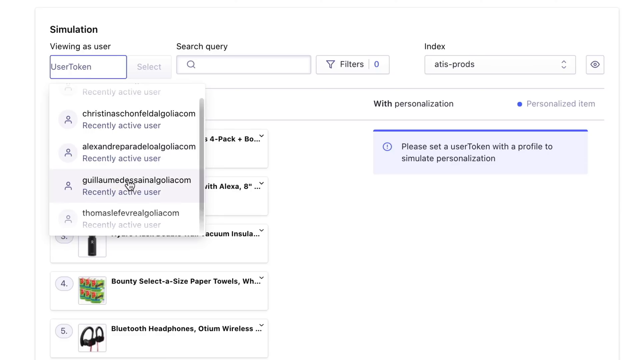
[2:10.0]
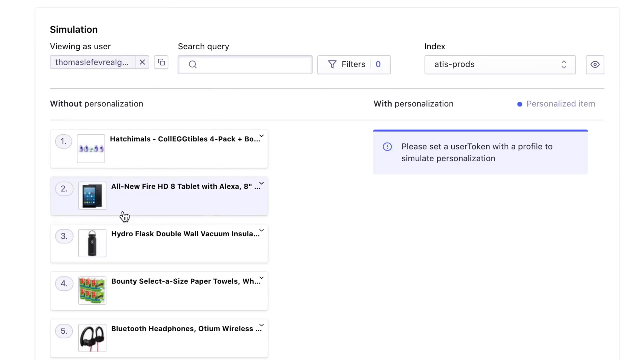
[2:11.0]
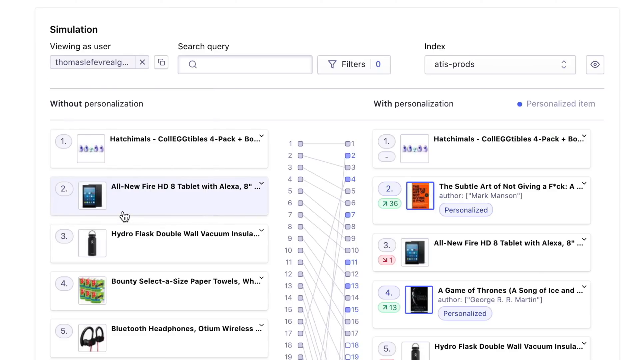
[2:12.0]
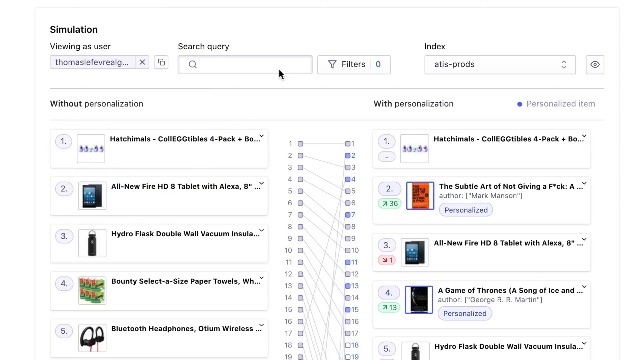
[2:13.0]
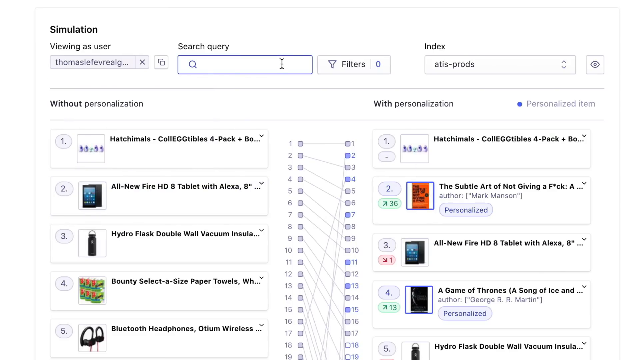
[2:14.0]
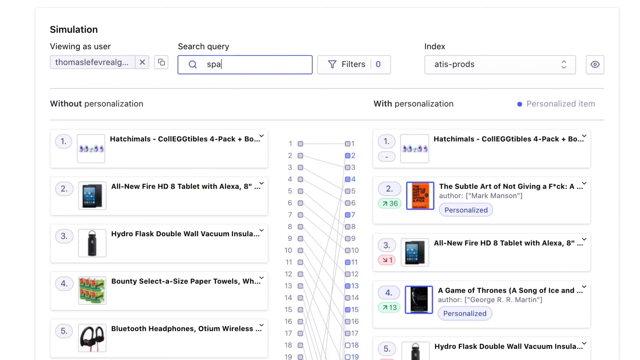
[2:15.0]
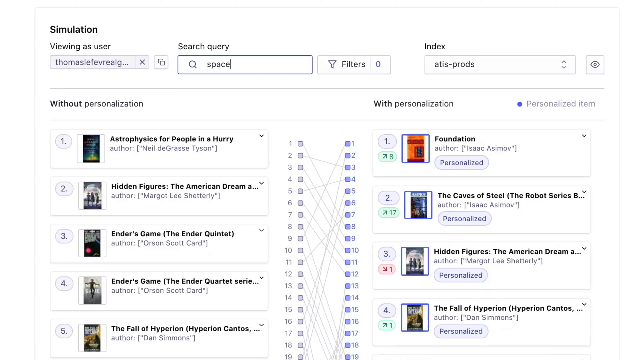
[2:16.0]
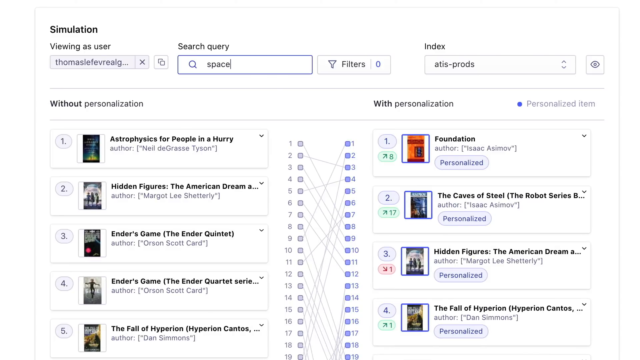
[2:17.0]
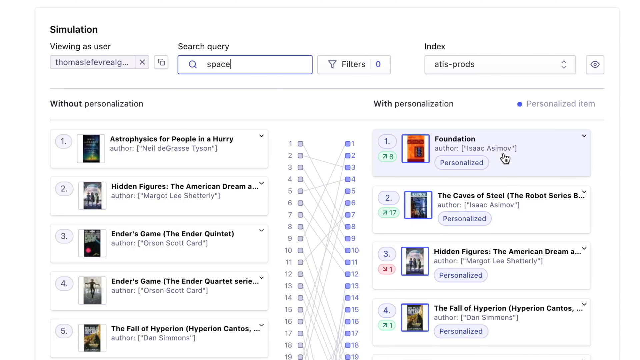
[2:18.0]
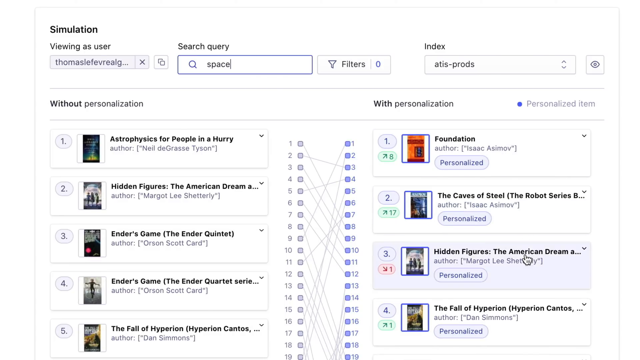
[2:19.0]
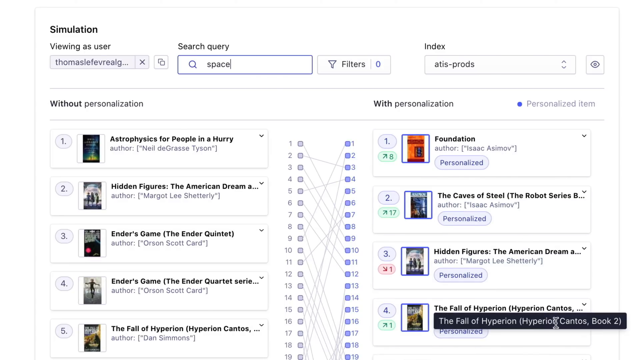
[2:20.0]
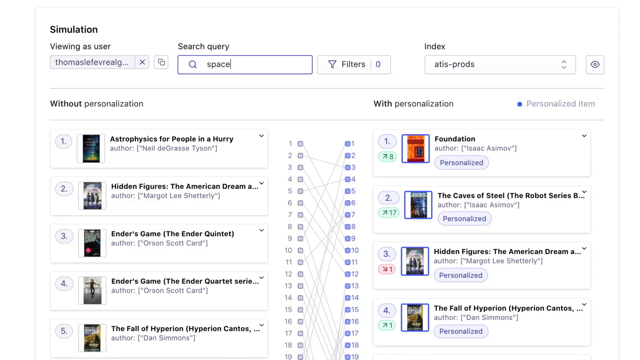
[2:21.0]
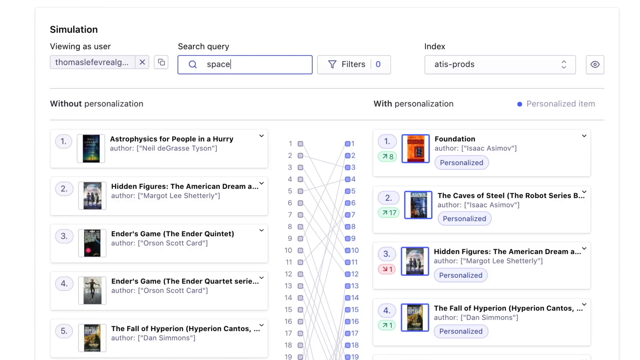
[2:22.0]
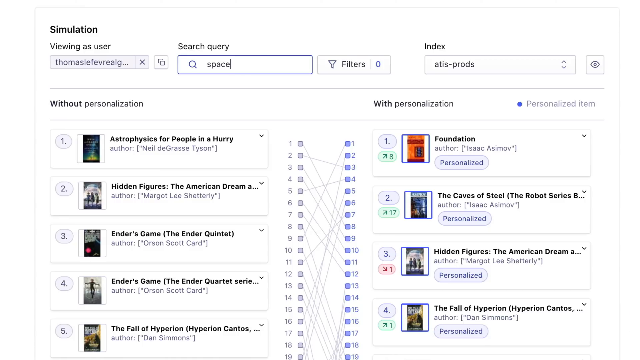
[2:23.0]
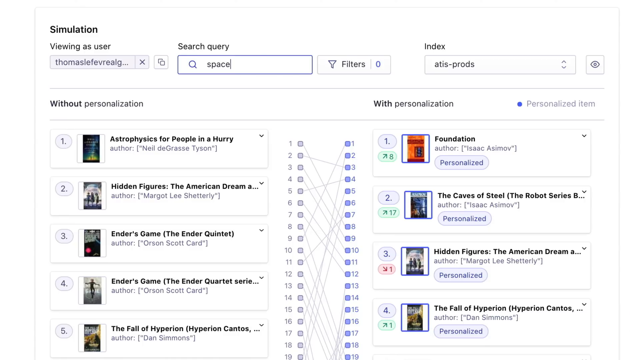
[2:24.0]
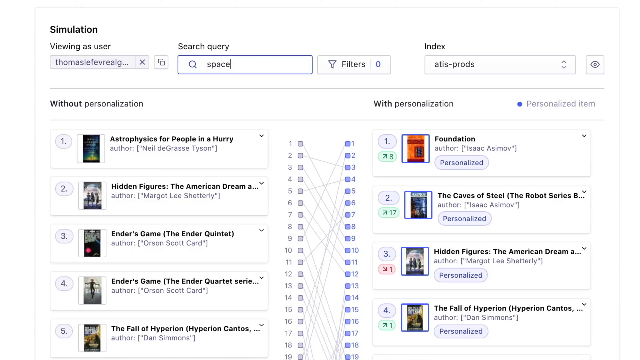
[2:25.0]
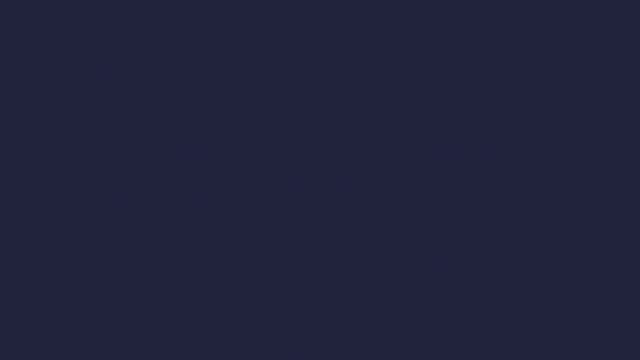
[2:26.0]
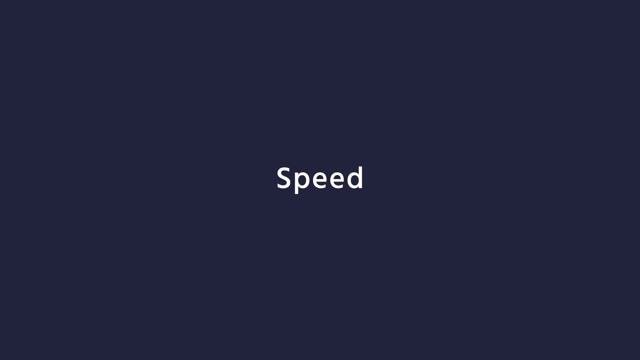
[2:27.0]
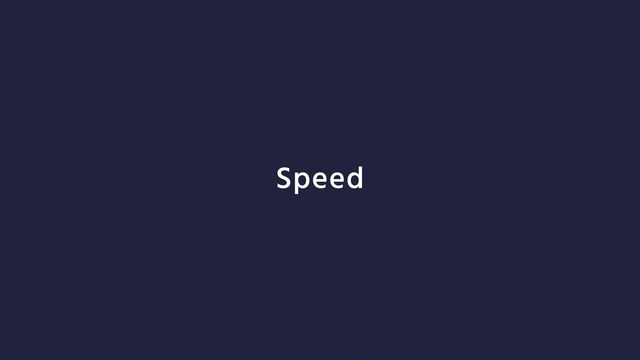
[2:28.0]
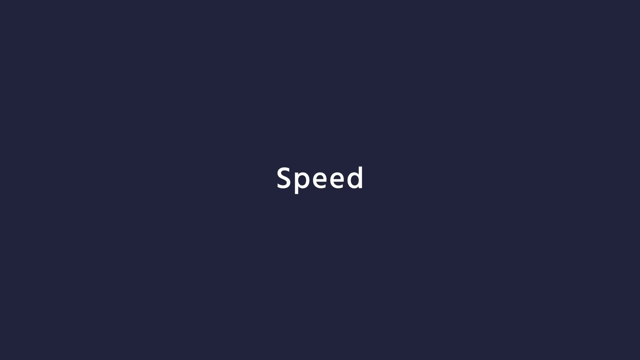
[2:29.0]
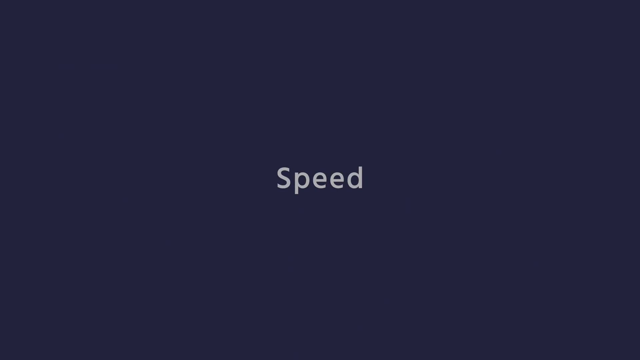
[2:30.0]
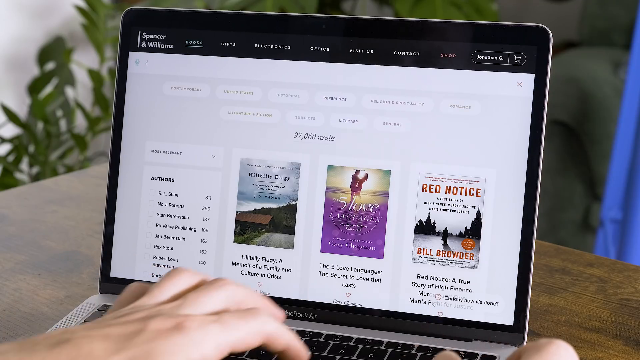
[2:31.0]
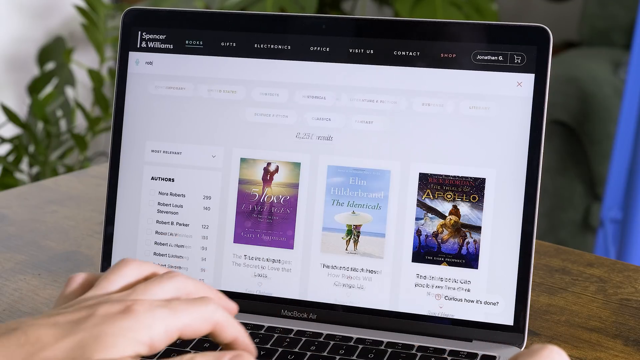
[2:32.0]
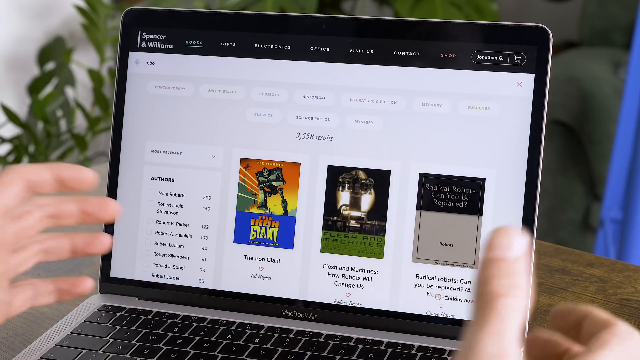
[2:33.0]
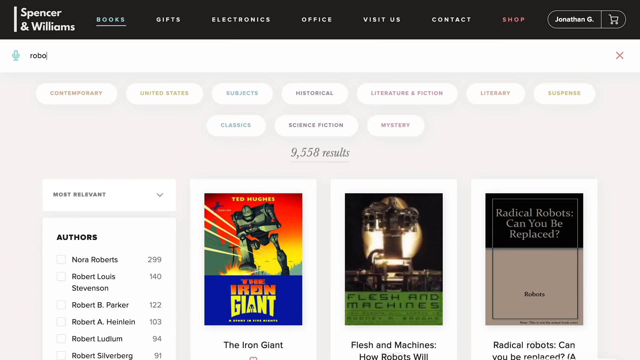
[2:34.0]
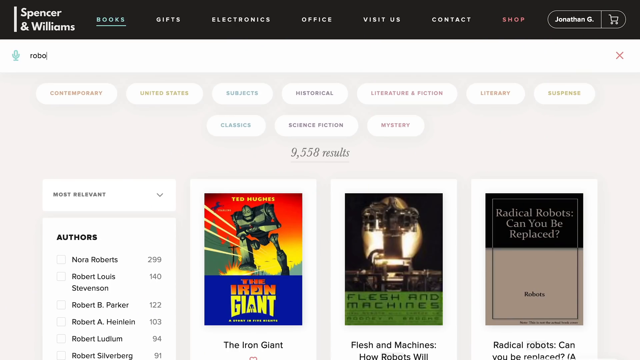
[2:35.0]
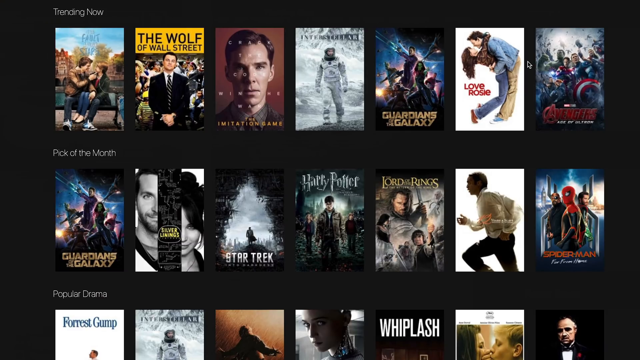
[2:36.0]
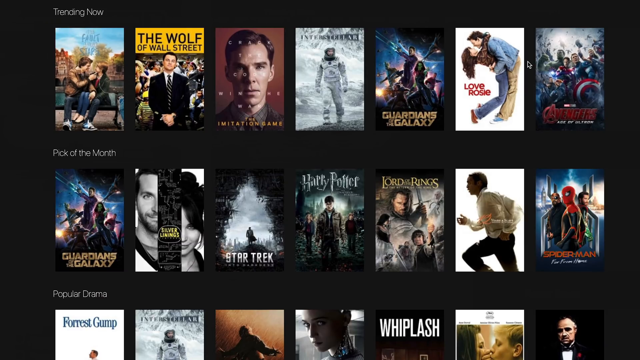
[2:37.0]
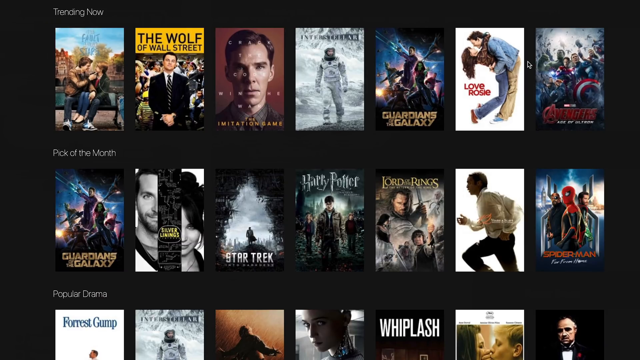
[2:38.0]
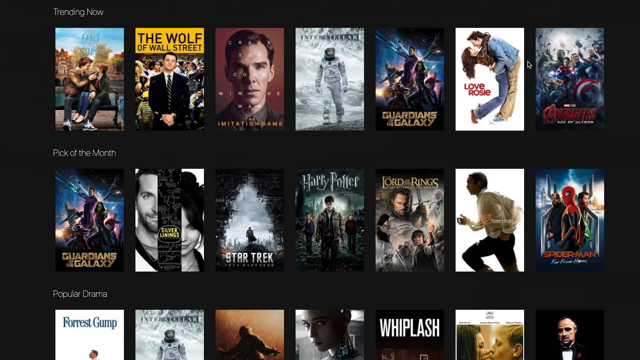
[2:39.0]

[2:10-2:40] The man teaching about the app or program Algolia, which has a stopwatch as part of its logo, uses a Mac computer, and his screen is visible some of the time. He appears to be in his kitchen. He is on a tab called "Simulation" and pulls down a menu from "User Token" that lists Christina Schoenfeld Algolia.com, Alexandra Parada at Algolia.com and Guillaume Medicina at Algolia.com. He hovers over Guillaume's name but clicks on someone named Thomas instead, and the screen shows all new items: Hatchimals, all new fire, Hydro Flask, Bounty Selecticized Towels and The Subtle Art of Not Giving an F*ck.